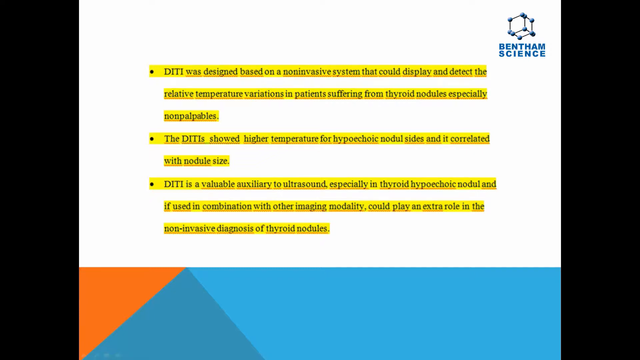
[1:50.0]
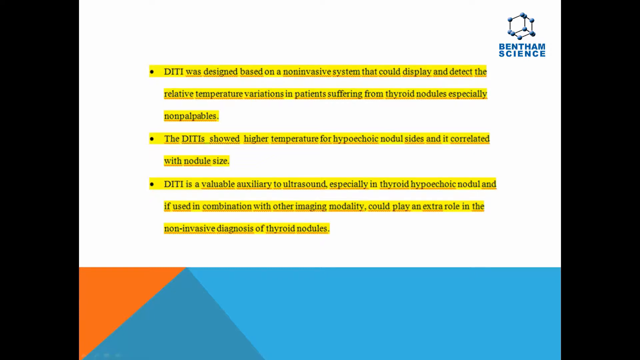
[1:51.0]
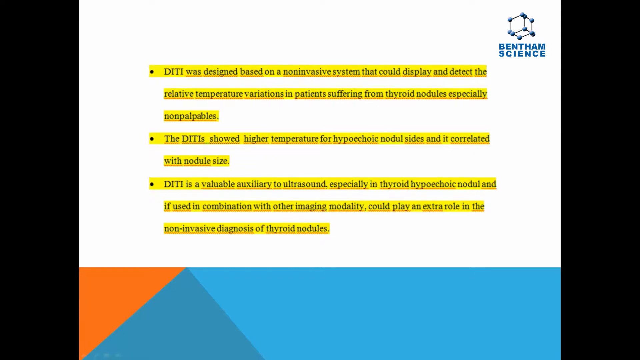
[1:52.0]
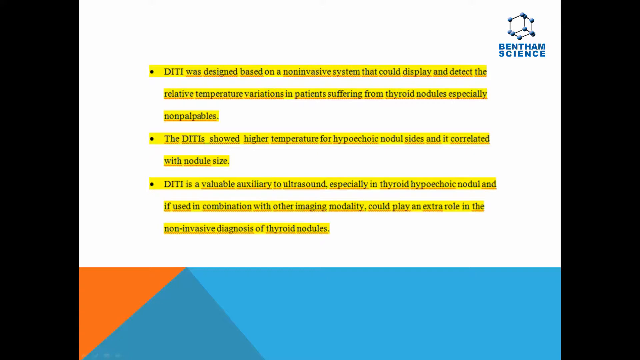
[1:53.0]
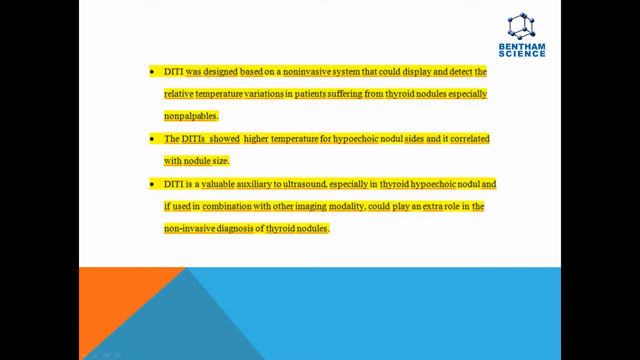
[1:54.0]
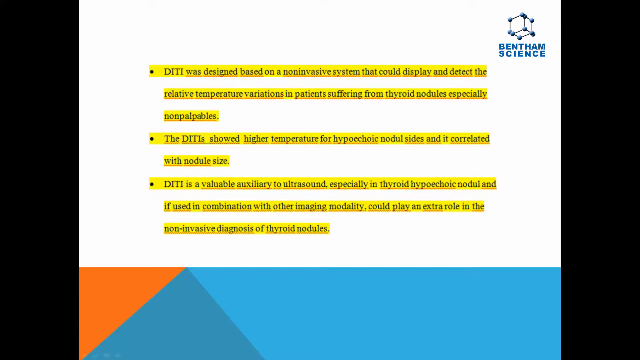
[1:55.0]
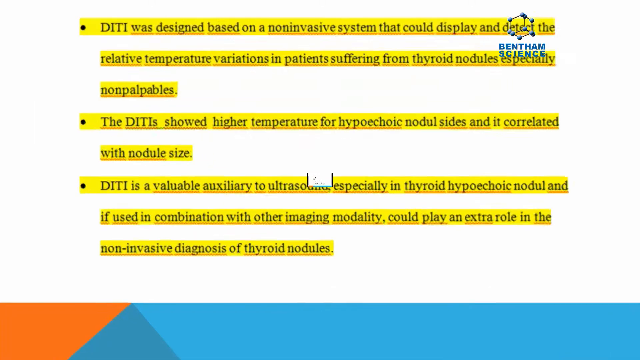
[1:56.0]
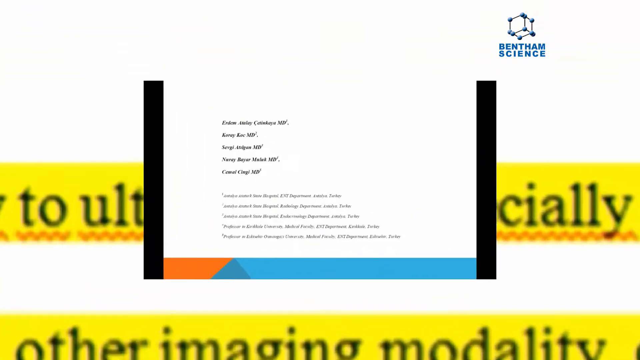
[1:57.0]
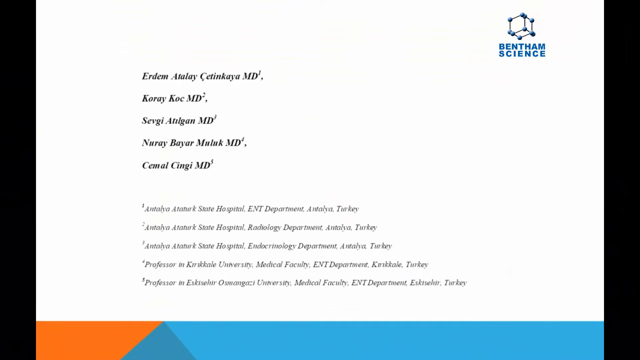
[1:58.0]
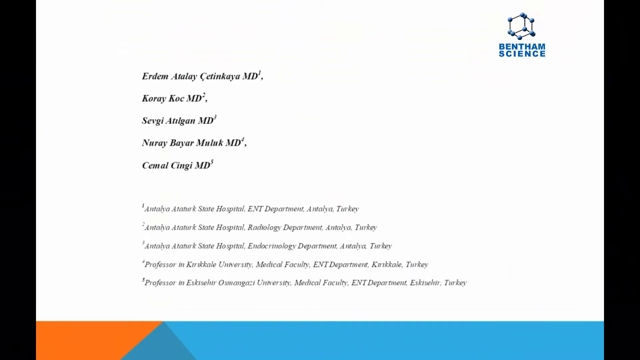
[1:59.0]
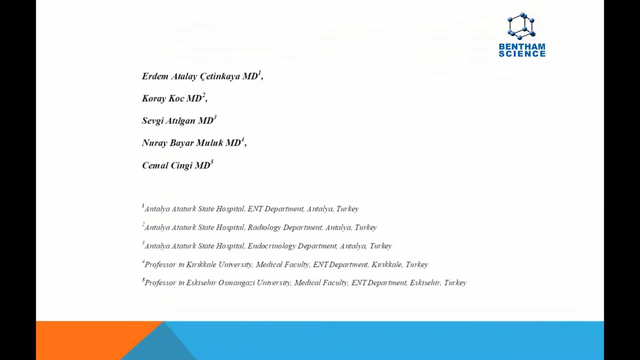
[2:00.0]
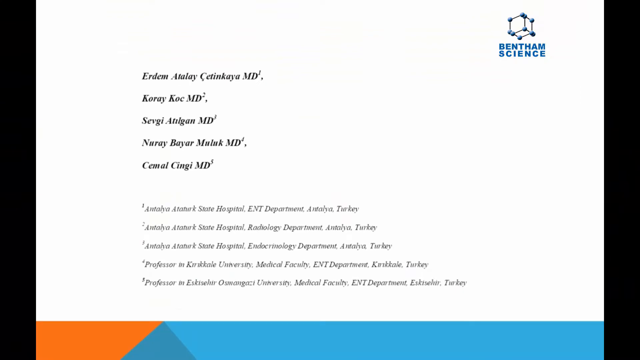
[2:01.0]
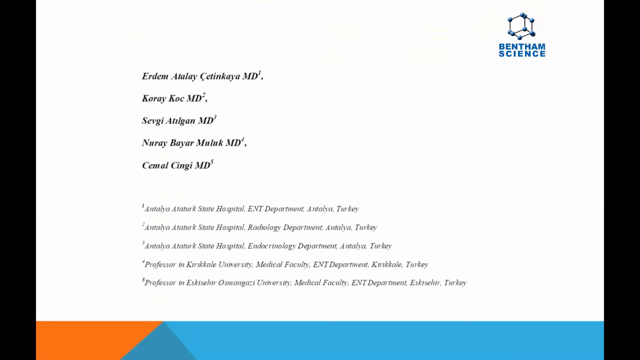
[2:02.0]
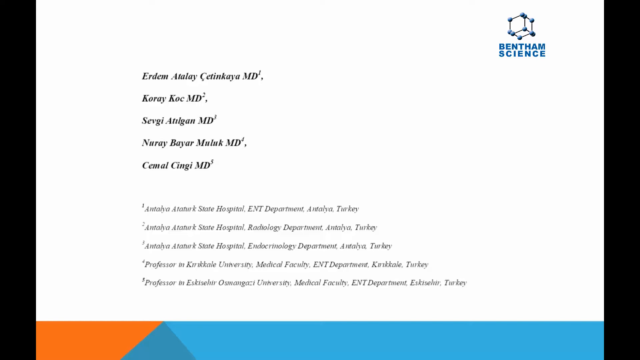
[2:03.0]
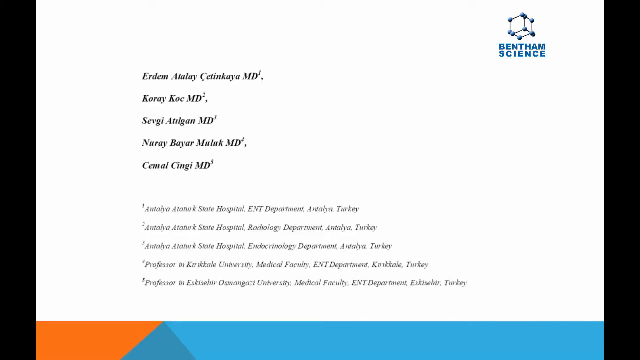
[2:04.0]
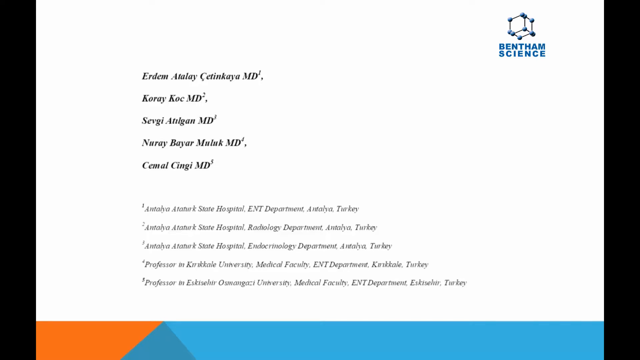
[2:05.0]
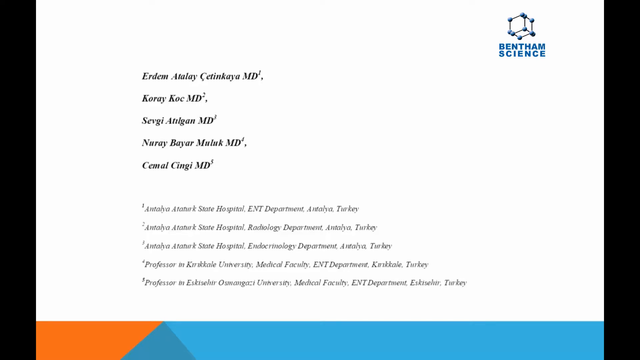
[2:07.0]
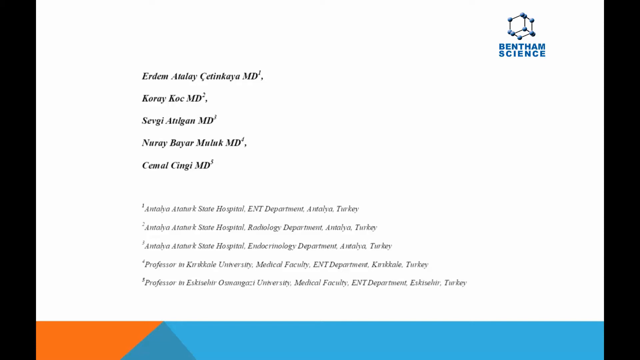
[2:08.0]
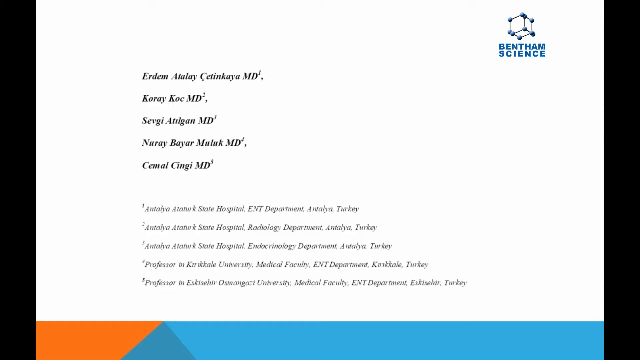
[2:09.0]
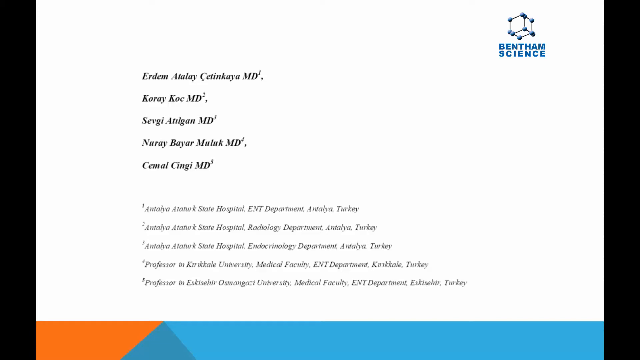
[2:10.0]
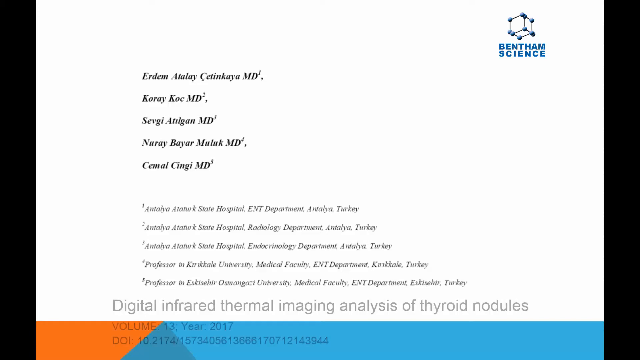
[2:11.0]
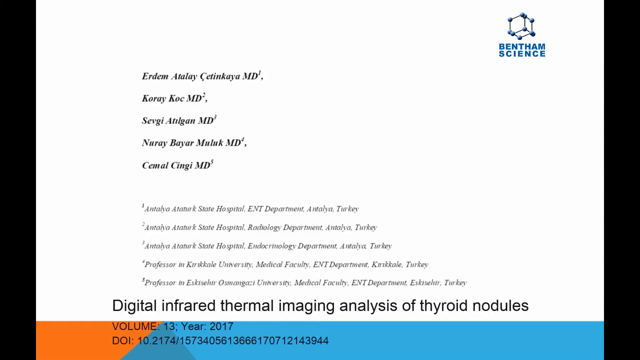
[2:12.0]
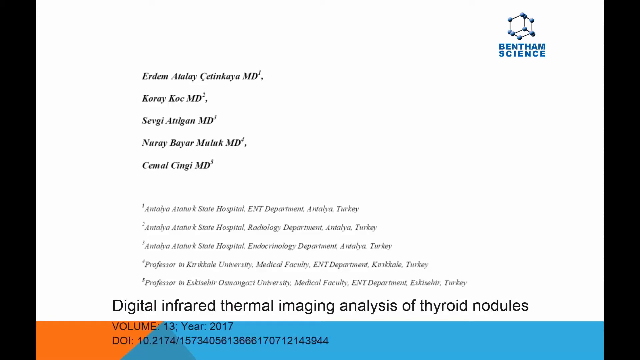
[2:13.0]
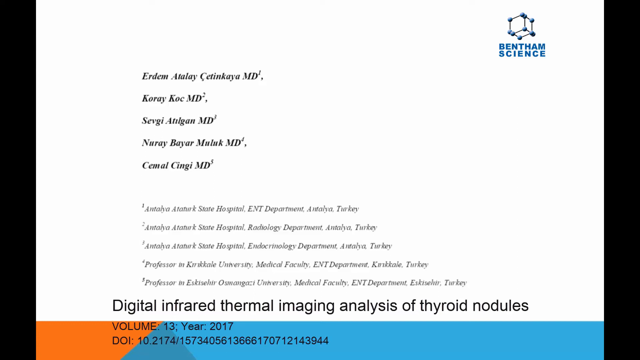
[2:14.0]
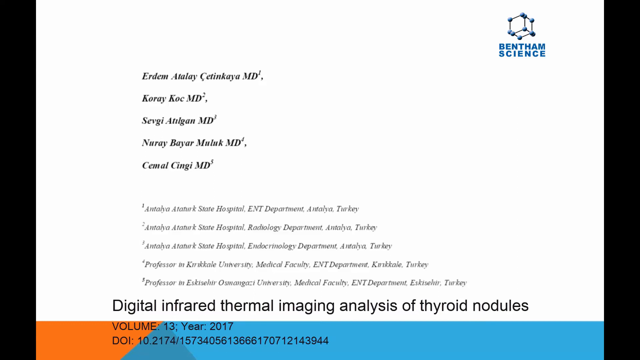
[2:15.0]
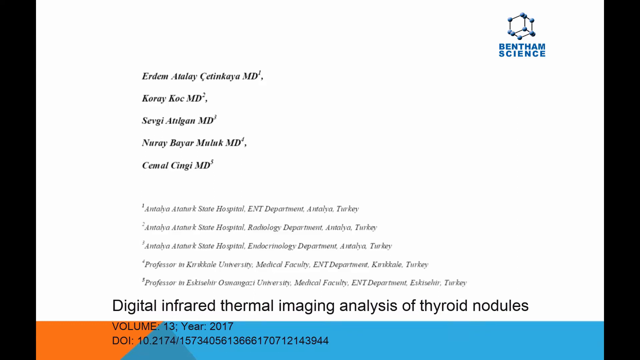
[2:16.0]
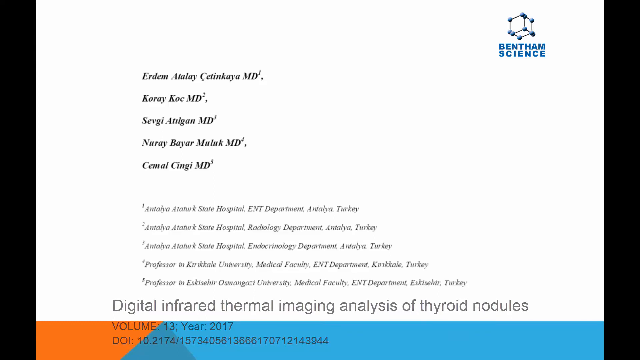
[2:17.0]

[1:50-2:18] A slide has a mostly white background, with a long rectangle along the bottom: a large aqua blue section on its right side, a darker blue pyramid to the left of that, and an orange tilted pyramid to the left of the pyramid. In the top right is the term "Bentham Science" with a 3D cube above it, its corners covered by blue balls. In the center of the screen is text highlighted in yellow in three bullet points. The first reads "DITI was designed based on a non-invasive system that could display and detect the relative temperature variations in patients suffering from thyroid nodules especially non-palpables." The second reads "the DITI showed higher temperature for hypoechoic nodule size and it correlated with nodule size." The third reads "DITI is a valuable auxiliary to ultrasound especially in thyroid hypoechoic nodule and if used in combination with other imaging modality could play an extra role in the non-invasive diagnosis of thyroid nodules." After some time, the video zooms in to a different page: a slide with a white background, the Bentham Science icon in the top right and the same long blue and orange rectangle. It shows what appears to be text from a clinical trial paper, a scientific paper, with a list of names on separate lines: "Erdem Atulay Setinkaya MD" with a 1 above the MD, "Kore Koc MD" with a 2, "Sevgi Atilgan MD" with a 3 above the MD, "Nurey Bayar-Muluk MD" with a 4 above the D, and "Cemal Sengi MD" with a 5 above the D. Medical facilities in Turkey follow on separate lines: "Antalya Ataturk State Hospital ENT Department Antalya Turkey", then the radiology department of the same hospital, then the endocrinology department of the same hospital in Antalya, Turkey. Next is a line beginning "professor in" naming a university medical faculty ENT department in Turkey, and finally a line about a professor at "Osmangazi University Medical Faculty ENT Department" in Turkey. After several seconds, a pop-up at the bottom reads "a digital infrared thermal imaging analysis of thyroid nodules, volume 13, year 2017".